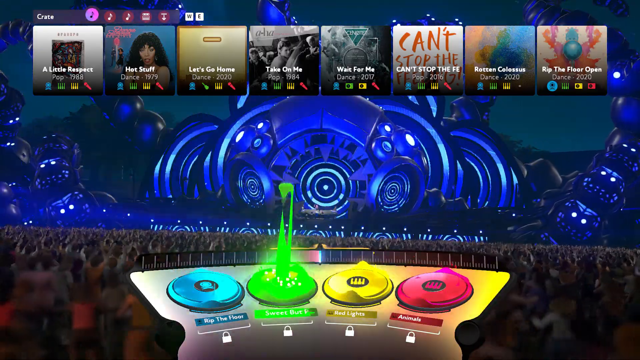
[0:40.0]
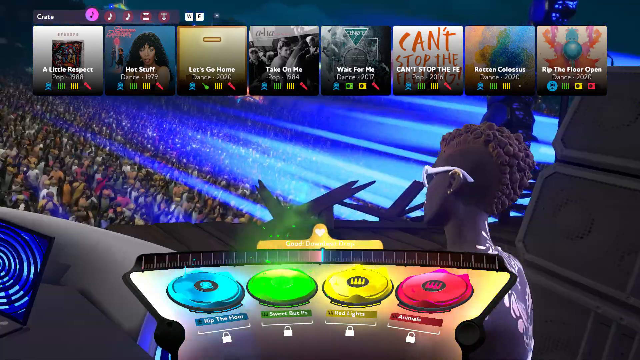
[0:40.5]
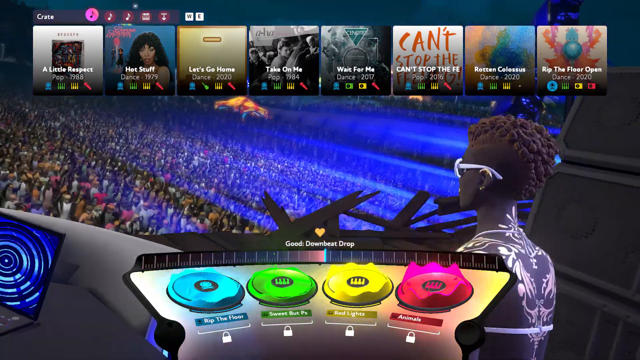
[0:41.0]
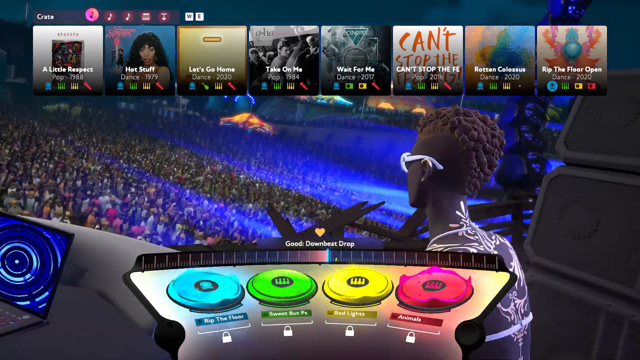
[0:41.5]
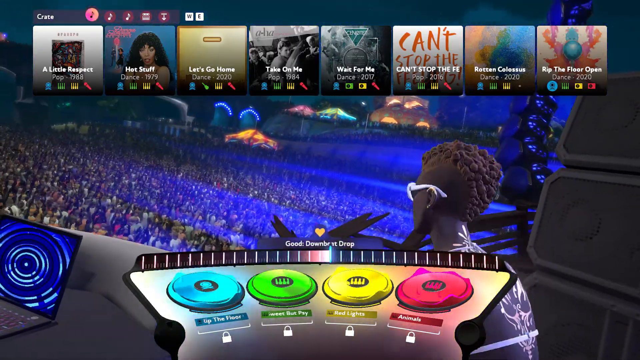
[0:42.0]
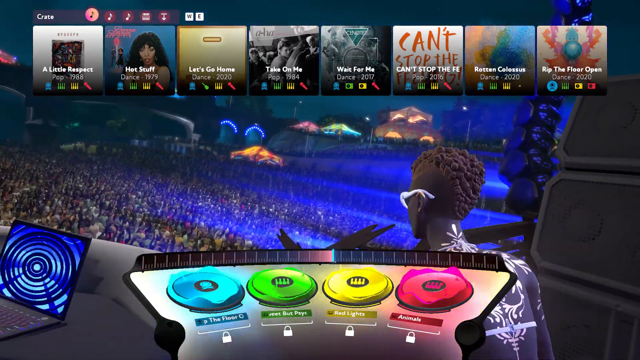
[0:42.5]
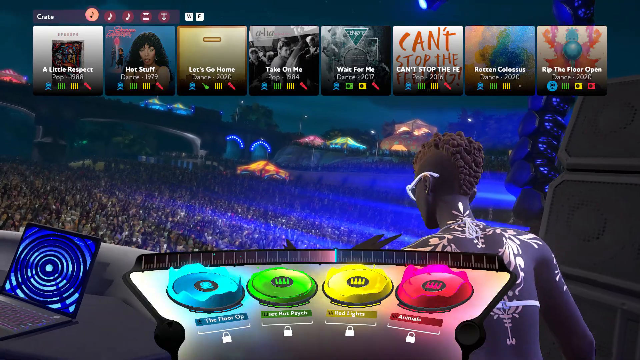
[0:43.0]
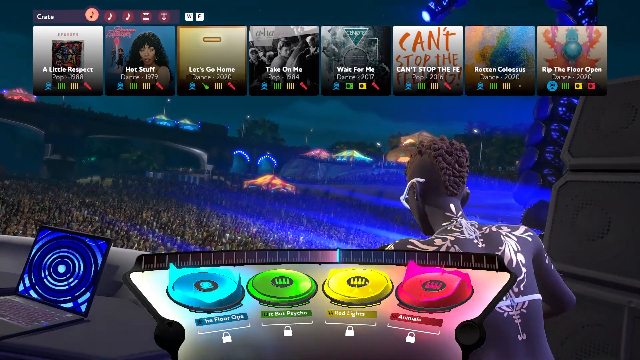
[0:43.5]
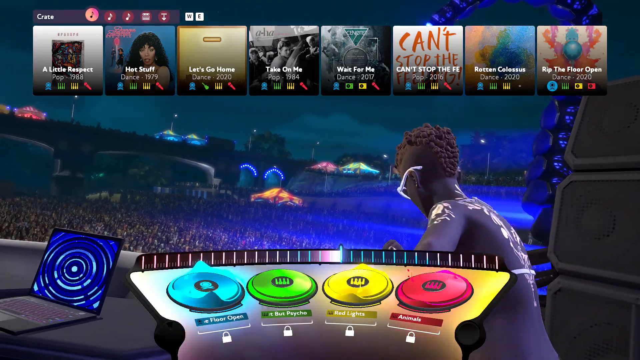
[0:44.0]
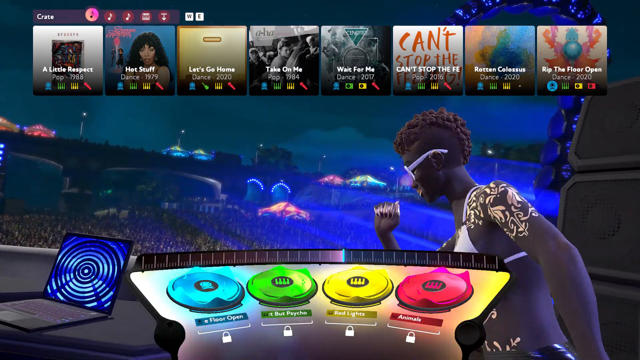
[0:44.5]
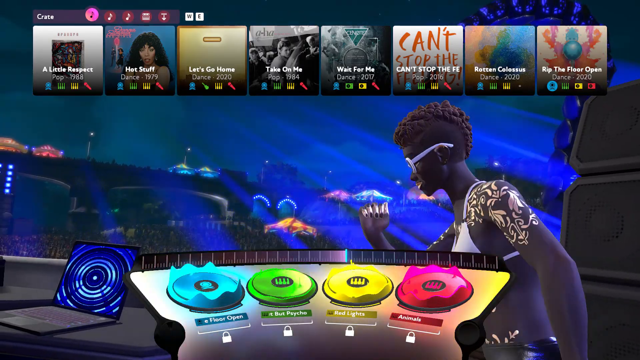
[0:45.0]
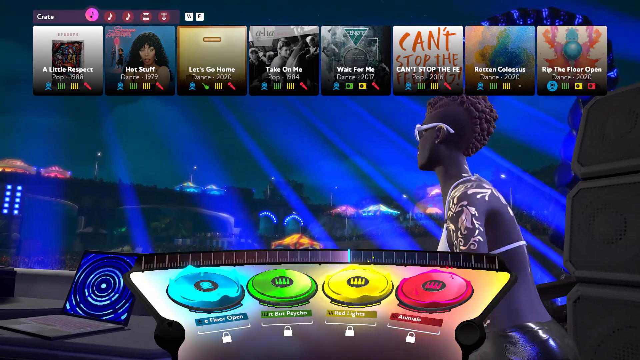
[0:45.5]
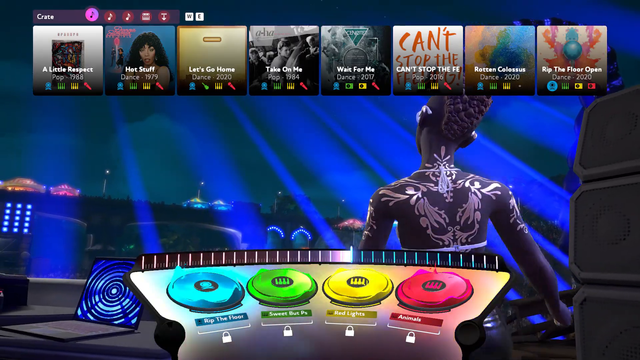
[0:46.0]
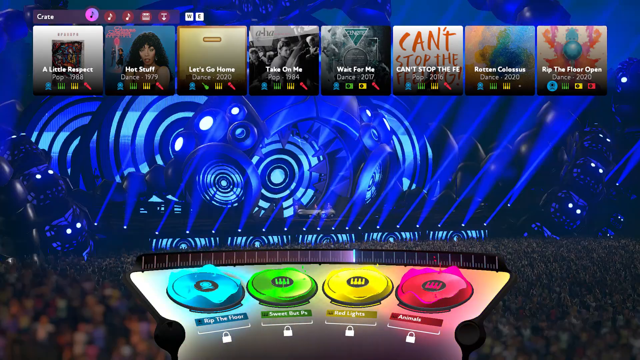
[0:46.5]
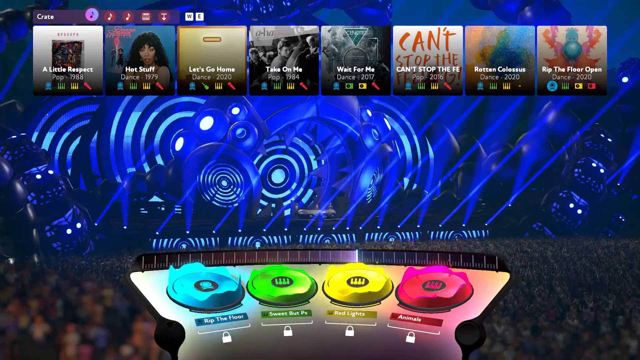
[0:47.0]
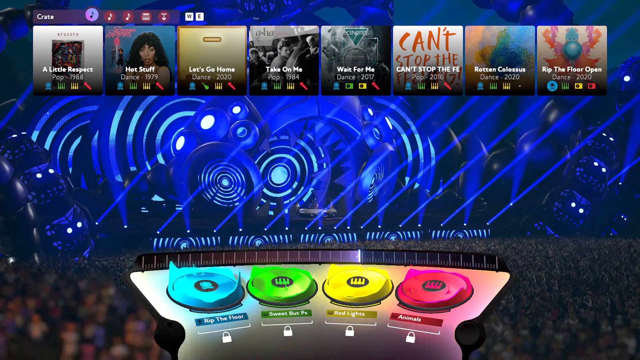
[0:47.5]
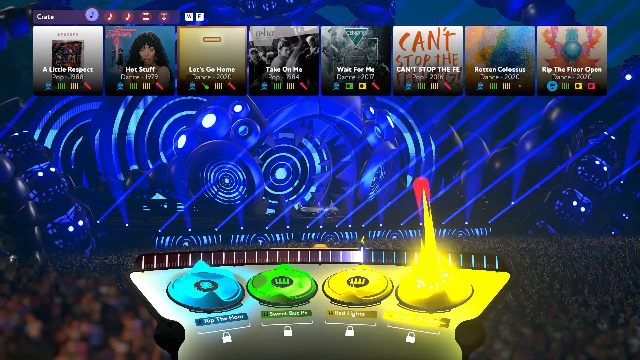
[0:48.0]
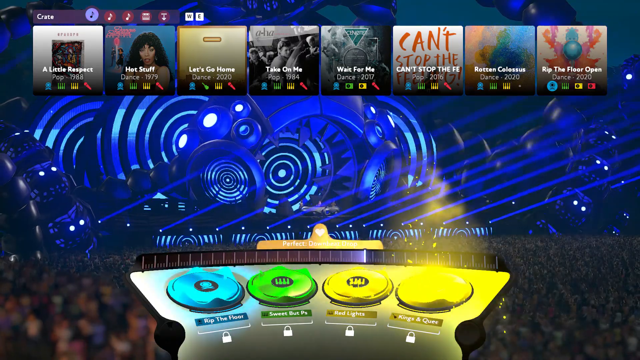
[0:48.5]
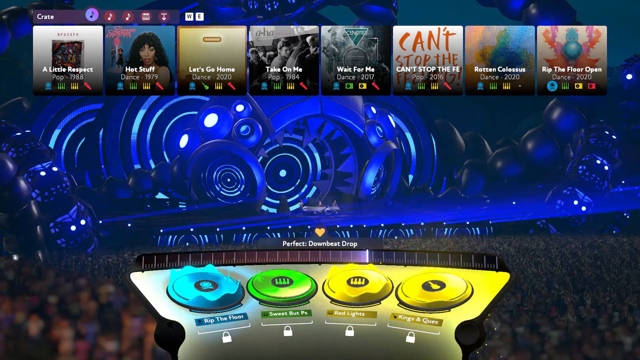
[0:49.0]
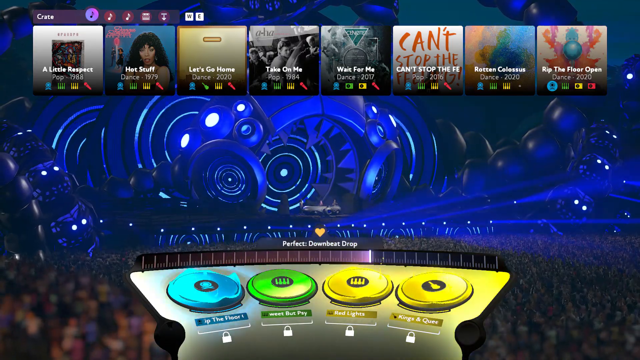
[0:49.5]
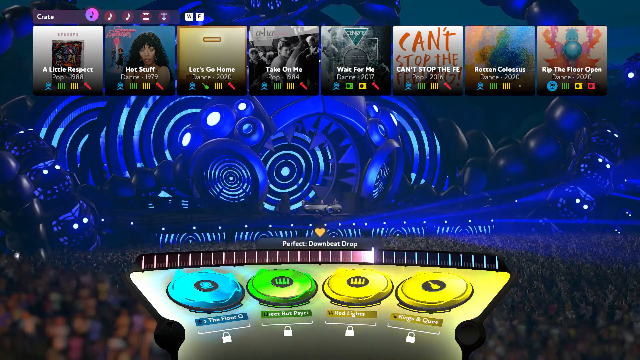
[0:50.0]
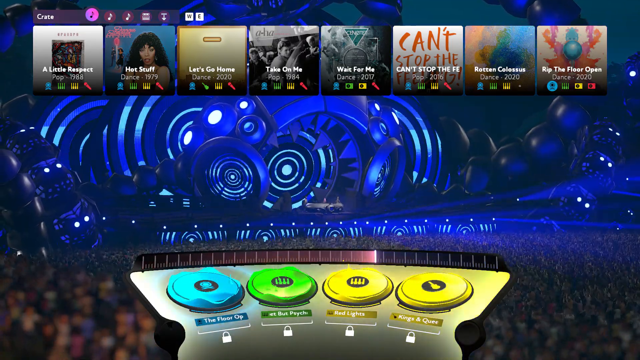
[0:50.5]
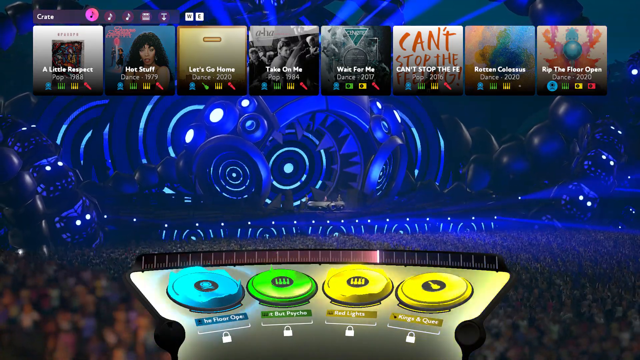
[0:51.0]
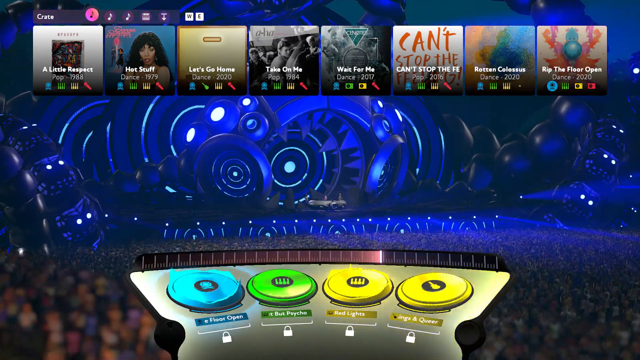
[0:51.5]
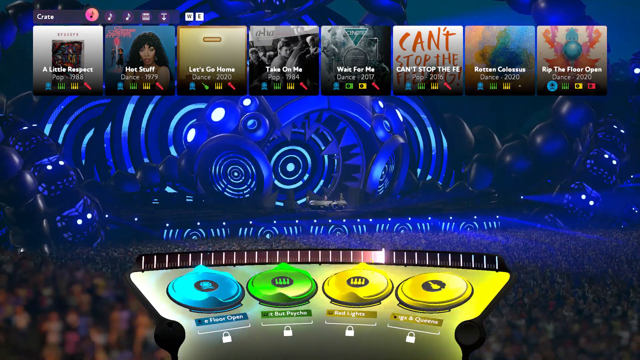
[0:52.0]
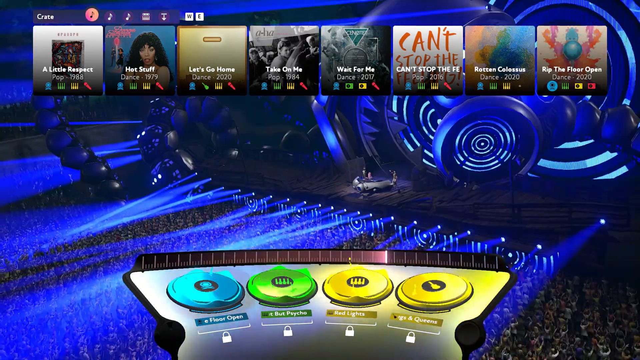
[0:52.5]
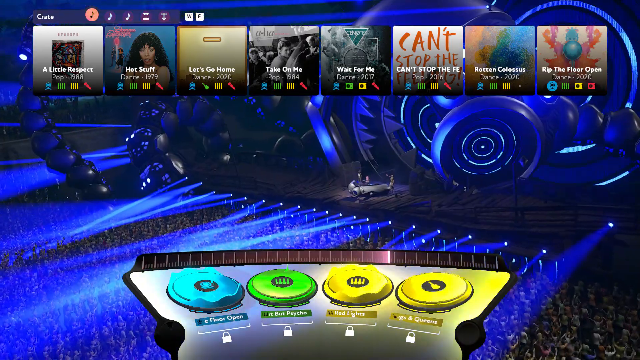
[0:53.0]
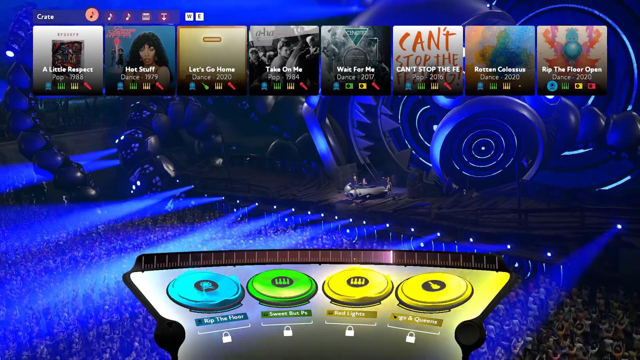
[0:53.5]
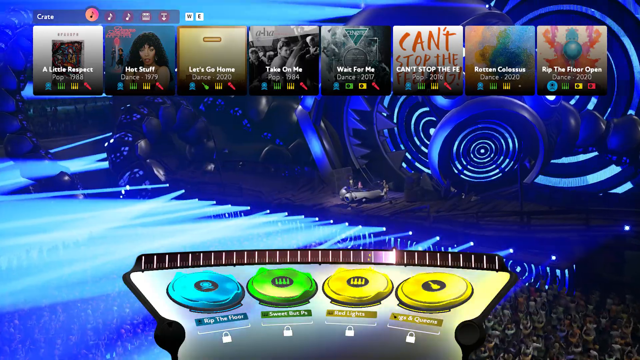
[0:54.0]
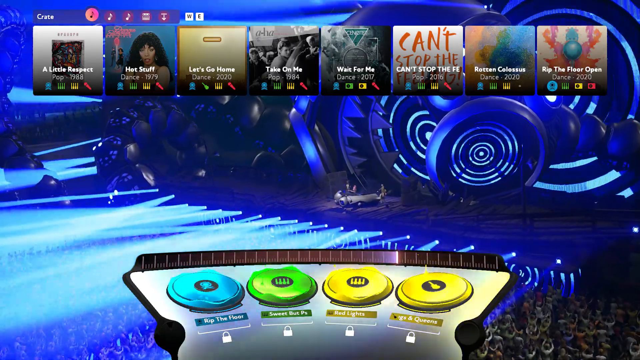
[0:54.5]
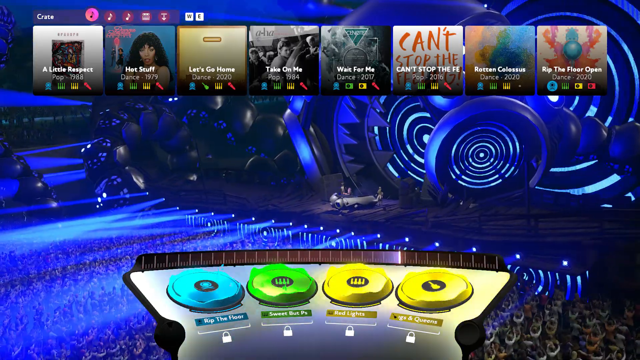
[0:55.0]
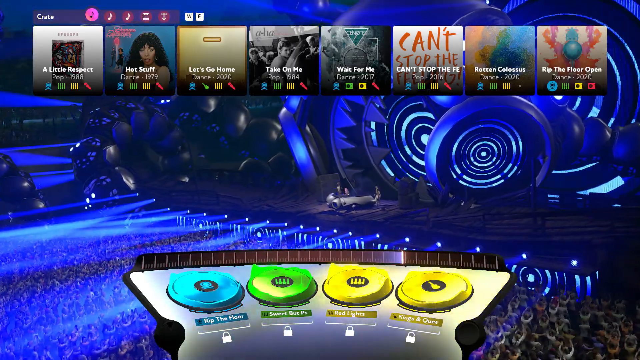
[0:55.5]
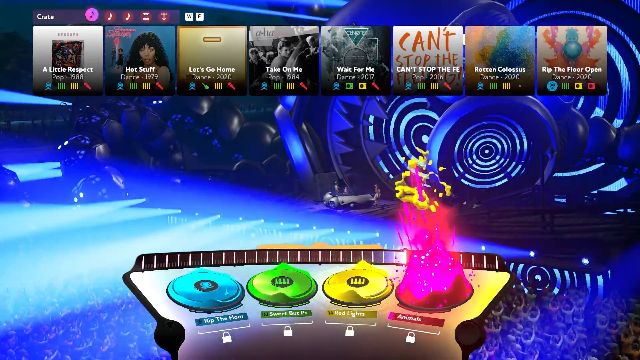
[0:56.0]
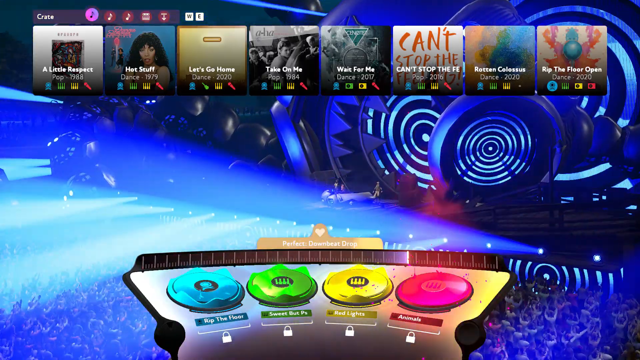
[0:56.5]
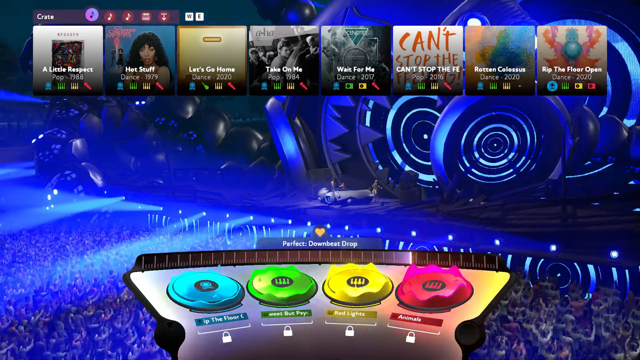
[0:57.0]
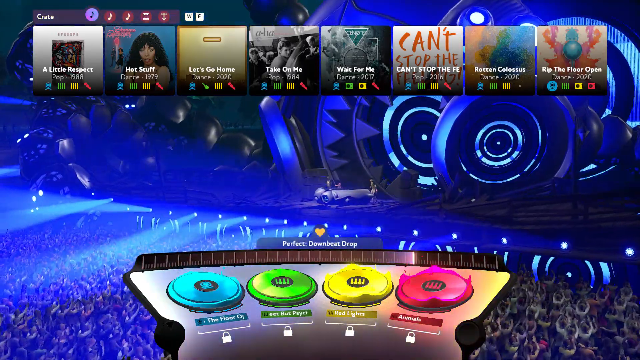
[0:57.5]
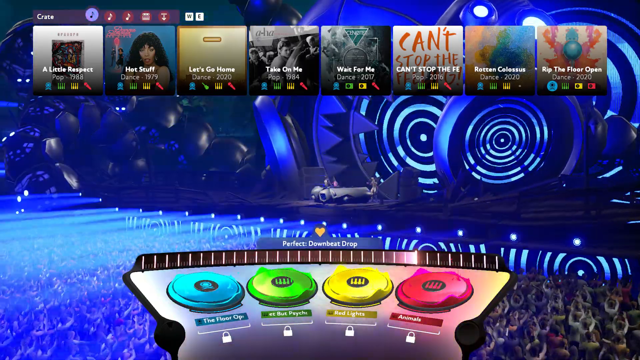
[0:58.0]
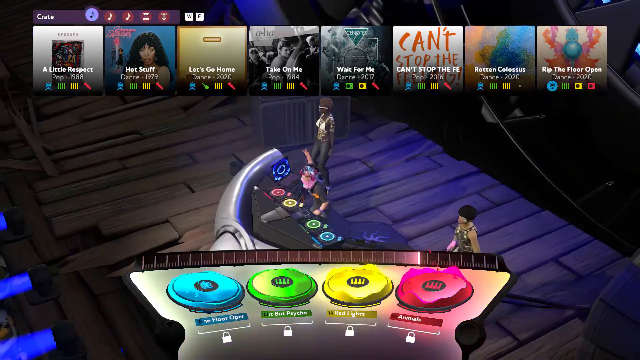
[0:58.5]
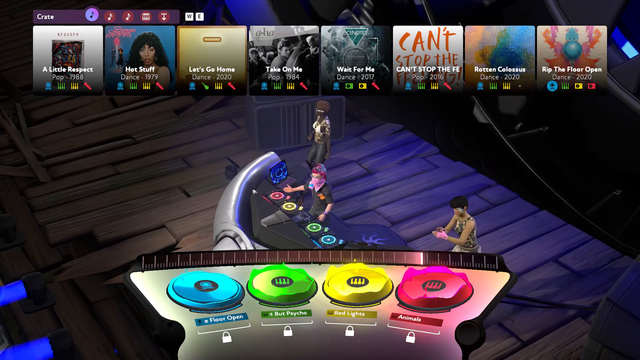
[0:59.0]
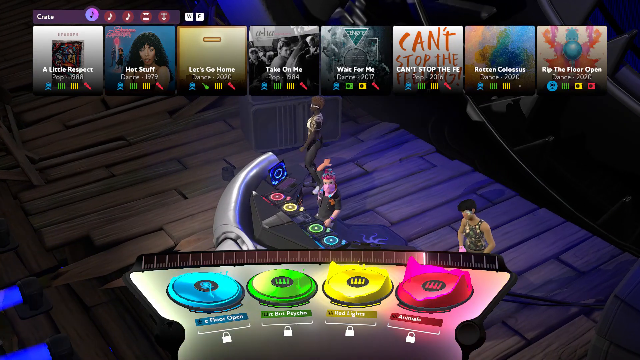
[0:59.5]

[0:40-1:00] The same song titles remain at the top with the single album covers: "a little respect", "hot stuff", "let's go home", "take on me", "wait for me", "can't stop that", one title too small to read, and "rip the floor open". In the DJ area, with its blue, green, yellow and reddish spots, the green light spikes up into the air. Somewhere text appears beginning with "good". A person appears who is colored entirely black, with white paint on it, as if the person has painted themselves.